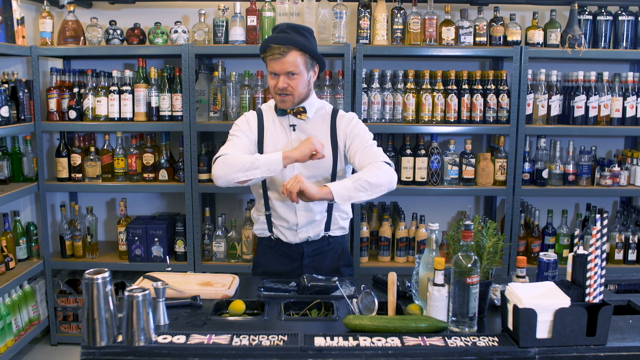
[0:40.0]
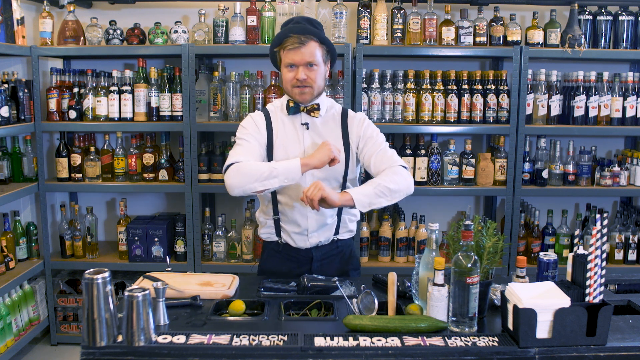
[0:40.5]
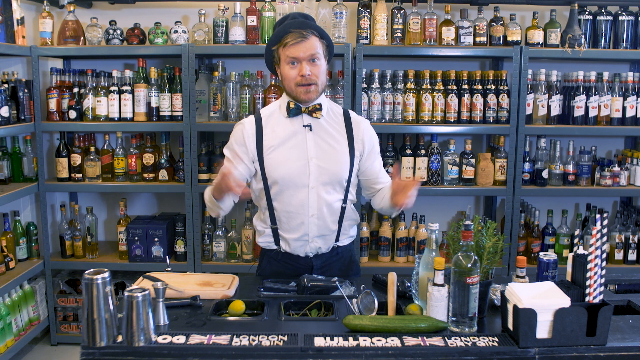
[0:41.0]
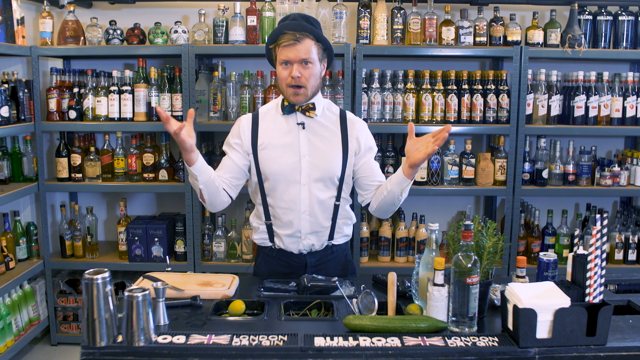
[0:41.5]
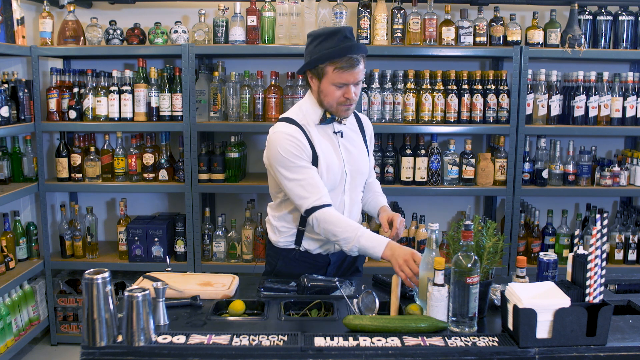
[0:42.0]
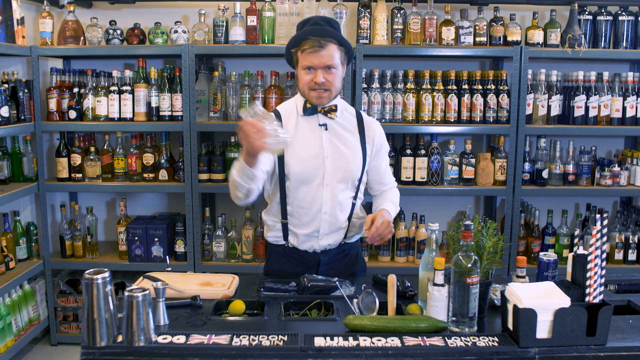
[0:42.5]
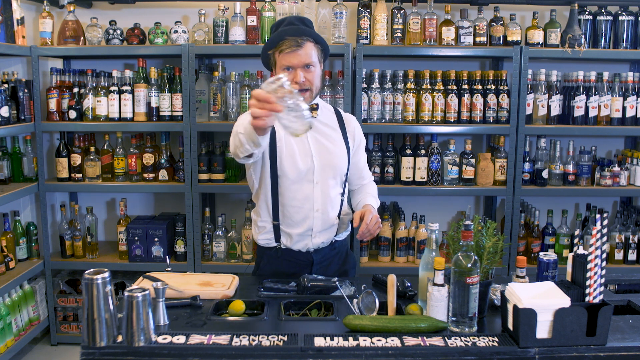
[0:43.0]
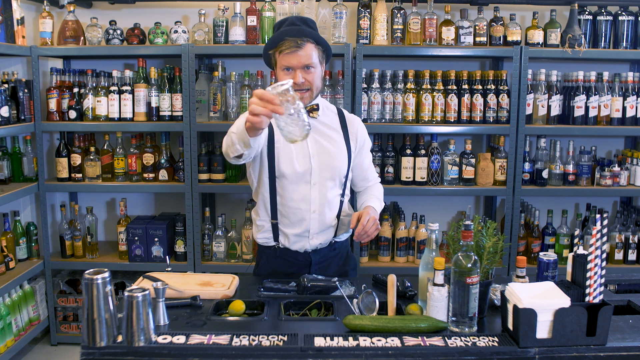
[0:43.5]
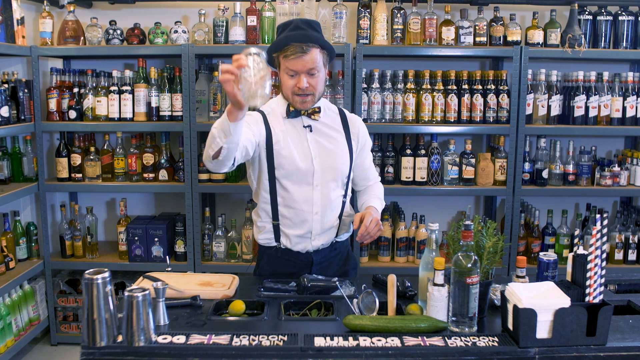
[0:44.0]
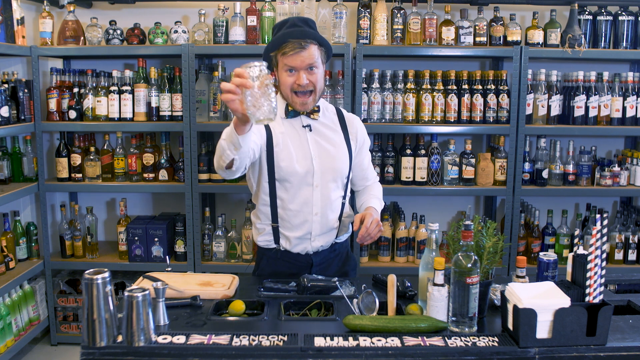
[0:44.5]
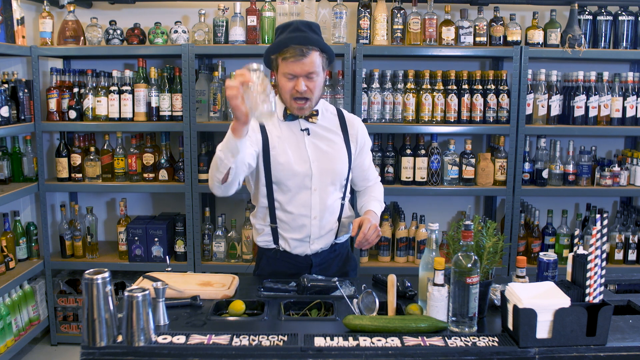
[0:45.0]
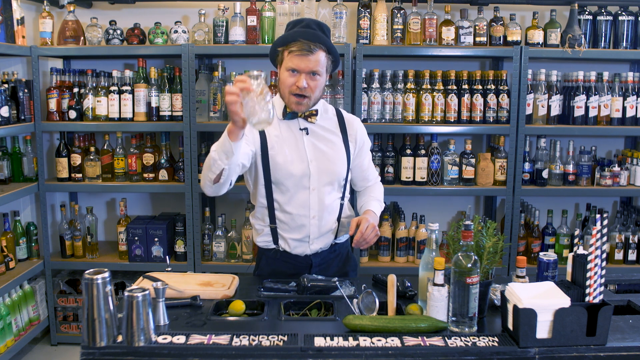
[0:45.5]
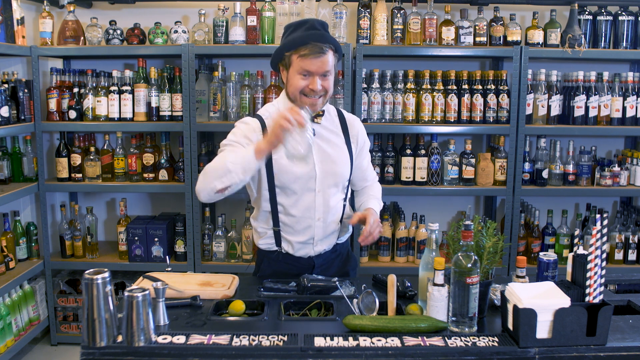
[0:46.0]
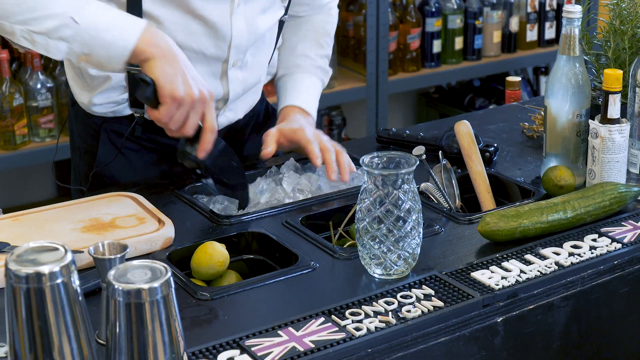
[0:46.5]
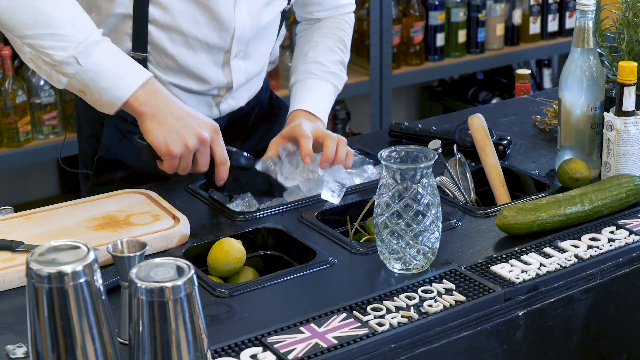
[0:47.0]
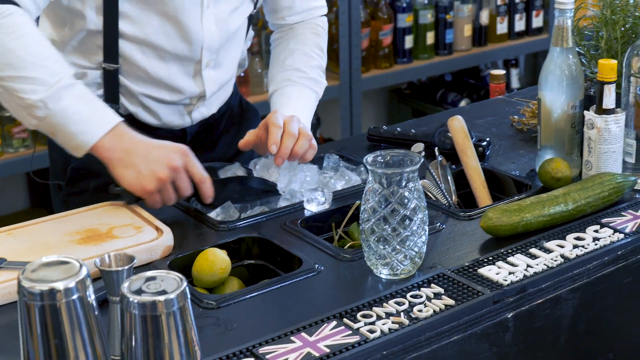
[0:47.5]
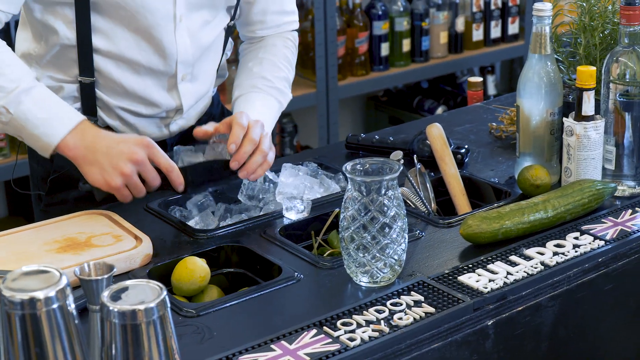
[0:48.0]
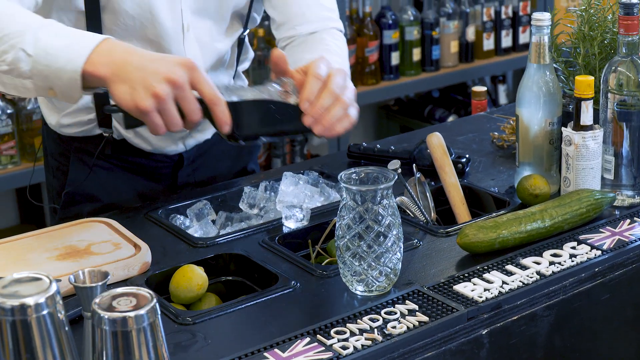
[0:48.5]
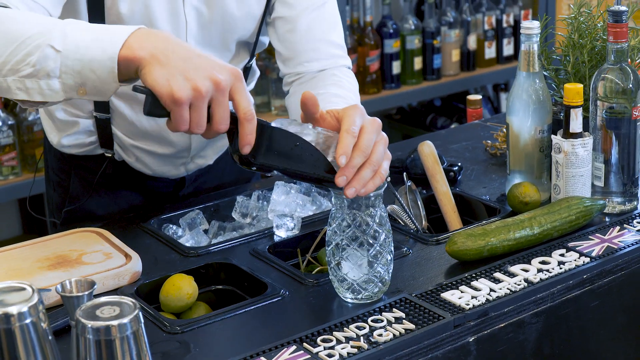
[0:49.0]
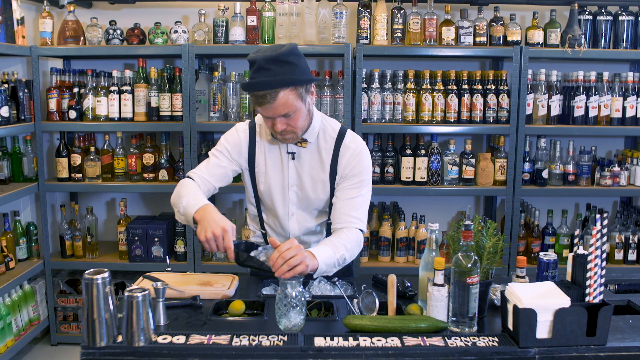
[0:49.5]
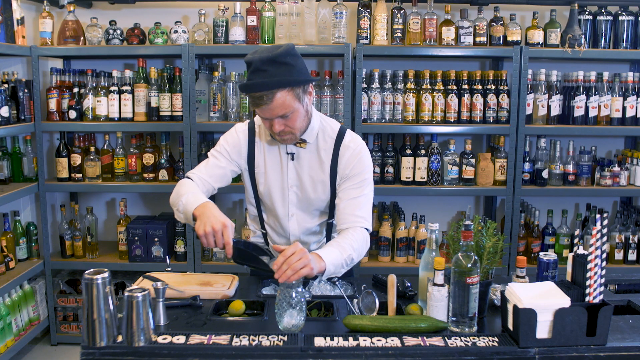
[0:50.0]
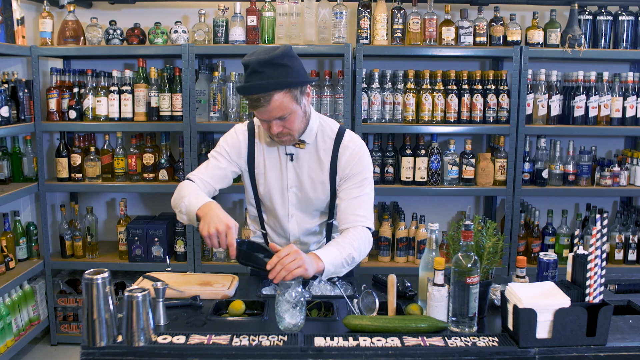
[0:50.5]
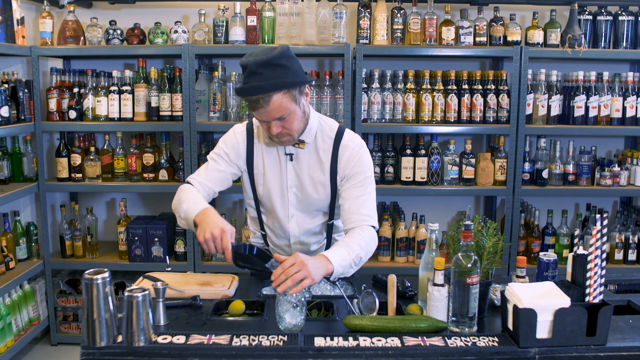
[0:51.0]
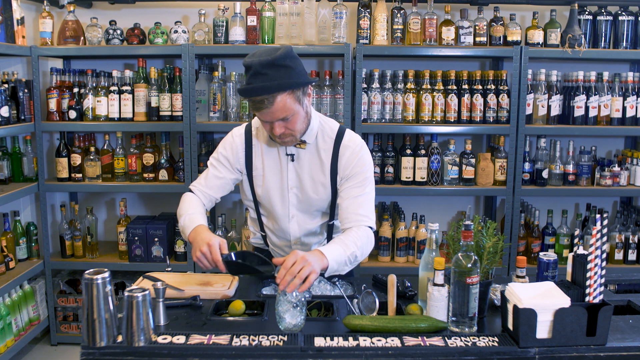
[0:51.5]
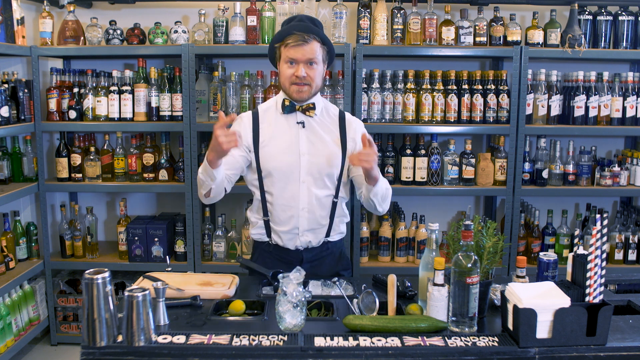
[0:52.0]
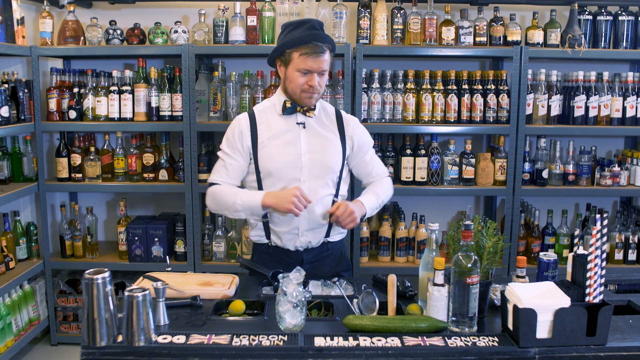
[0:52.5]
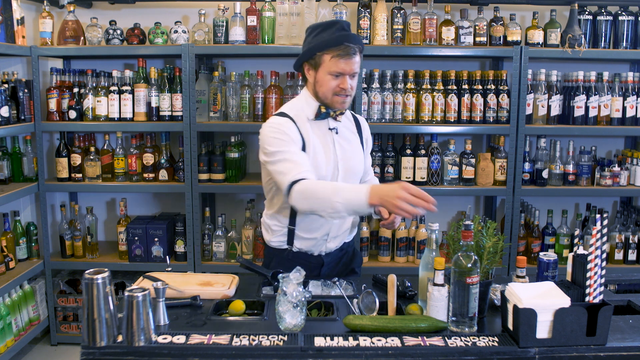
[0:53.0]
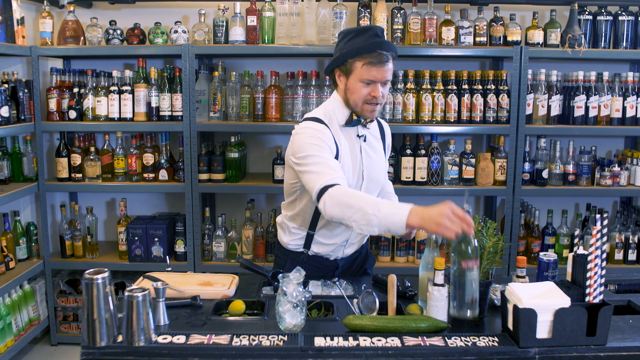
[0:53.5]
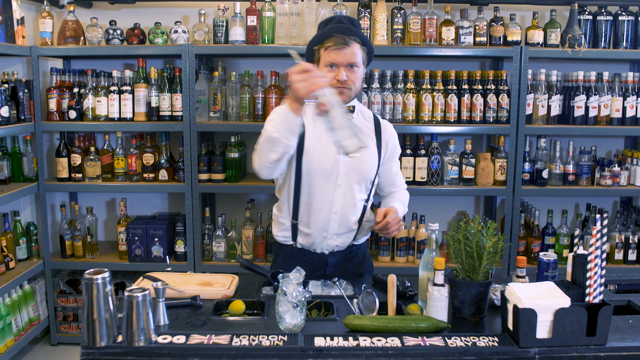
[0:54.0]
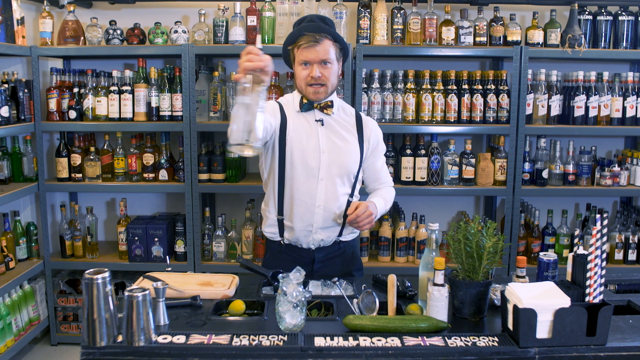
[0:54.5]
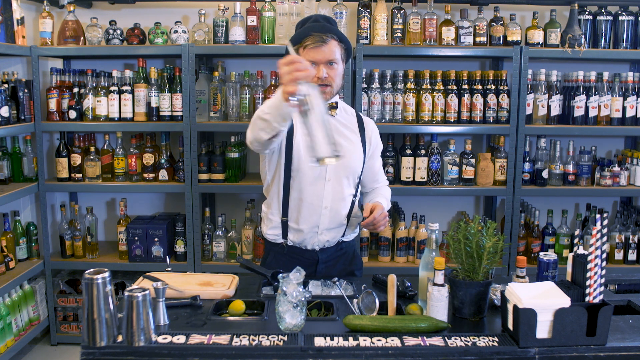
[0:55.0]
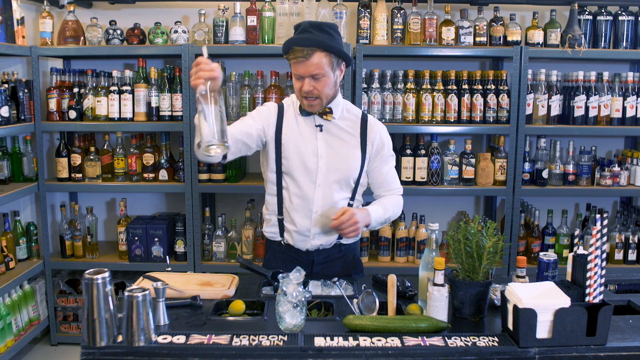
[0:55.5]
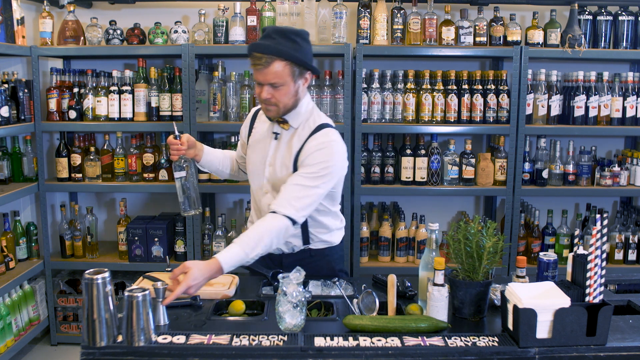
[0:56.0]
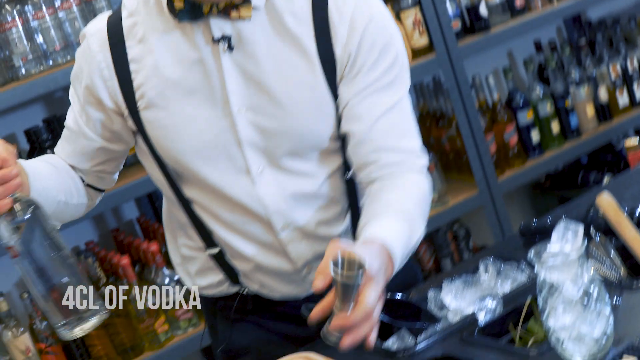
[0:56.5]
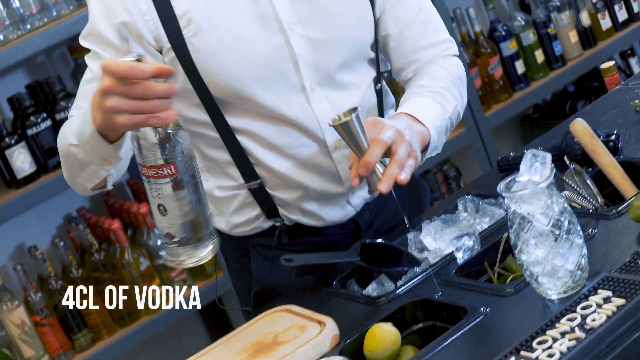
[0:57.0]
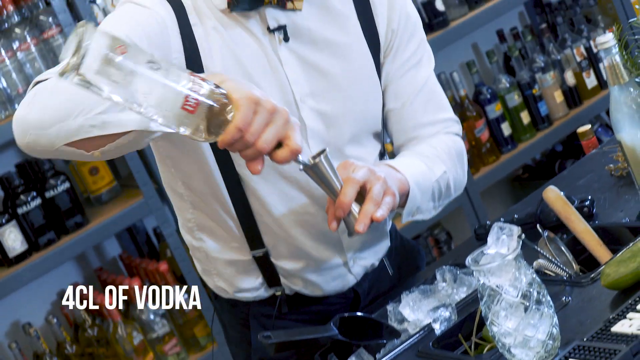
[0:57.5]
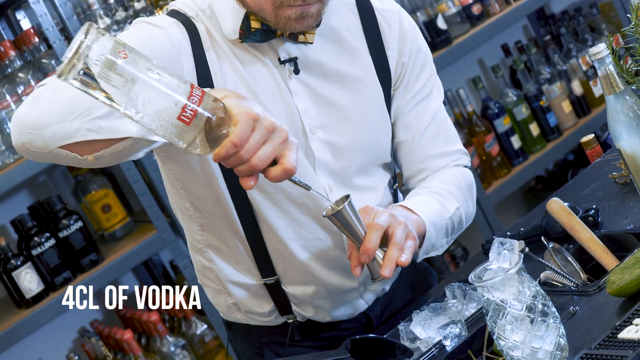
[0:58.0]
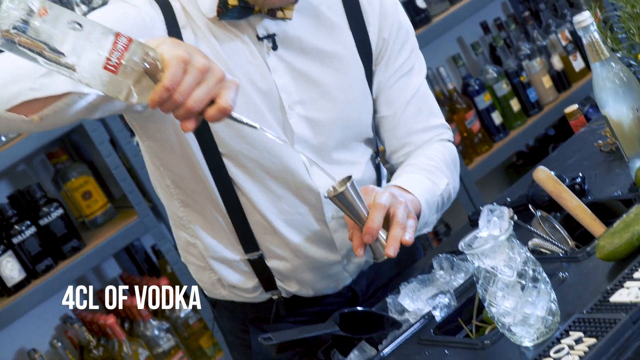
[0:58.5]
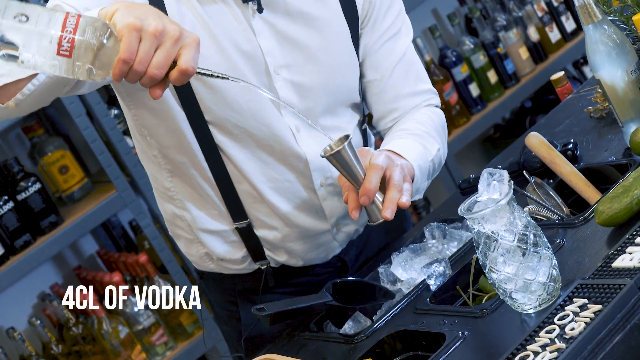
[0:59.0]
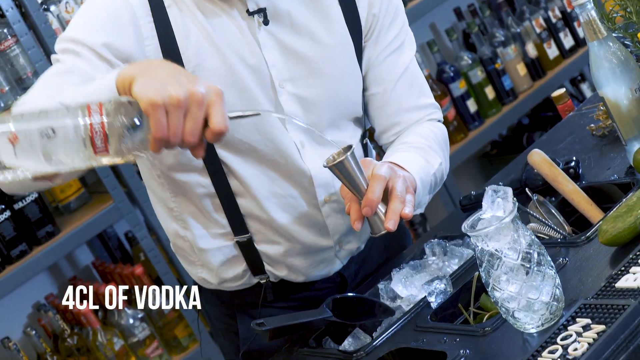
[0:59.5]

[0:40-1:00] Rasmus stands behind a shelf filled with various alcoholic drinks, gesticulating, with a mic attached to his white shirt. He picks up a glass cup, points at it with his hand as he waves it, and places it back on the black table. The table has text and a flag on it: a Union Jack flag is inscribed on it, along with the words "London Dry Gin" and "Bulldog" in white. Using a black ice spoon, with one hand covering the front of the spoon, he scoops ice from a bowl on the table and carefully pours it into a glass cup designed like a pineapple. He grabs the vodka, and text shows the amount to add: "4cl of Vodka." He pours it into a stainless steel cup.